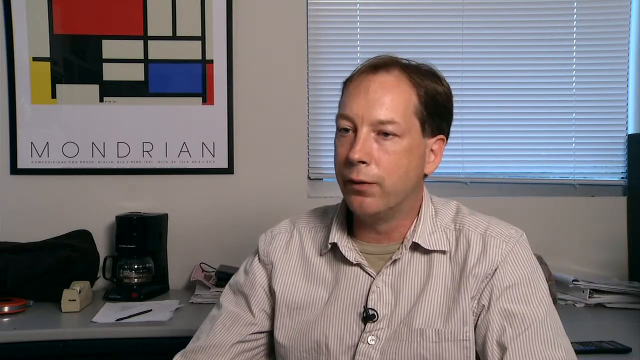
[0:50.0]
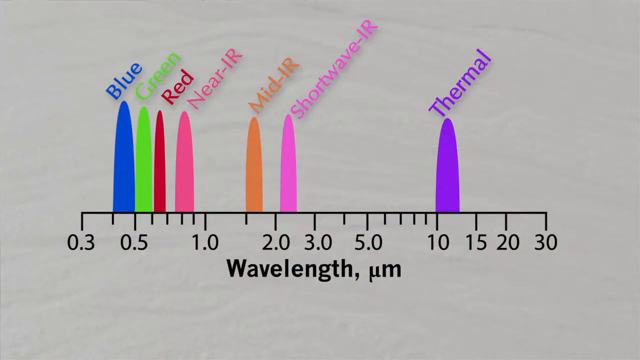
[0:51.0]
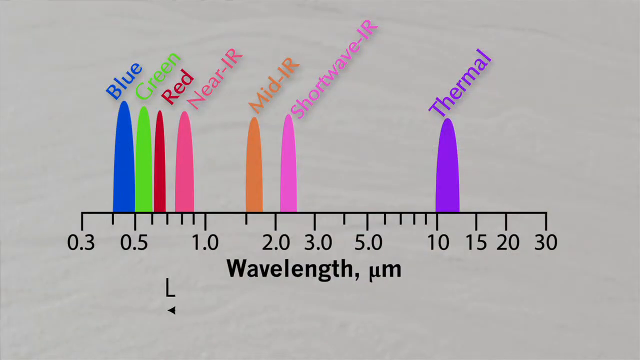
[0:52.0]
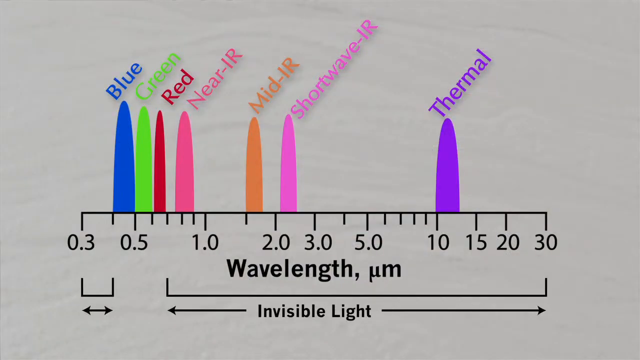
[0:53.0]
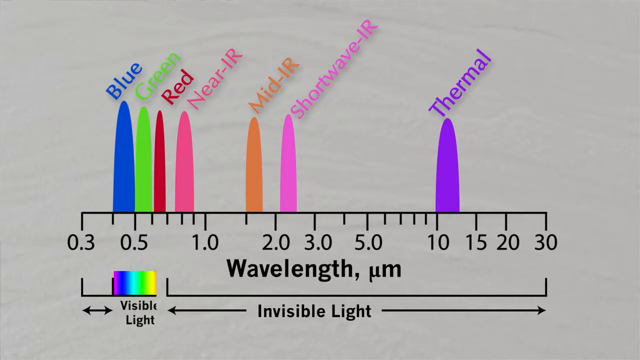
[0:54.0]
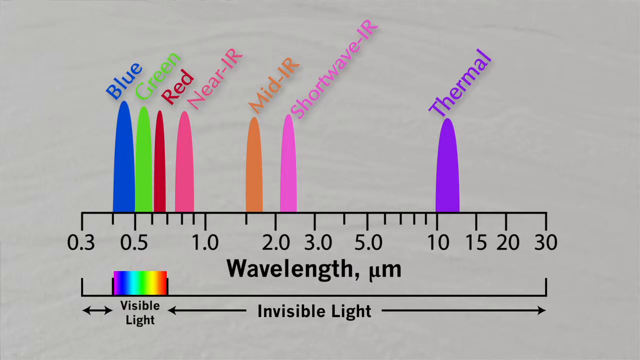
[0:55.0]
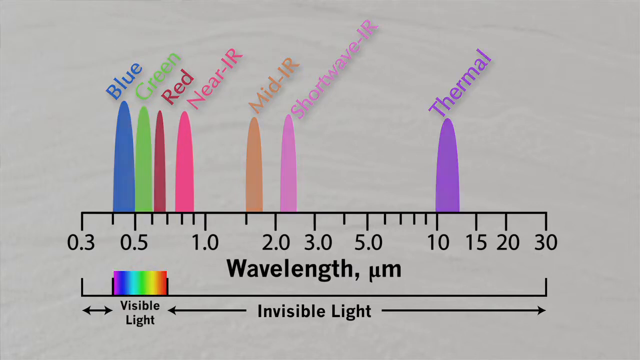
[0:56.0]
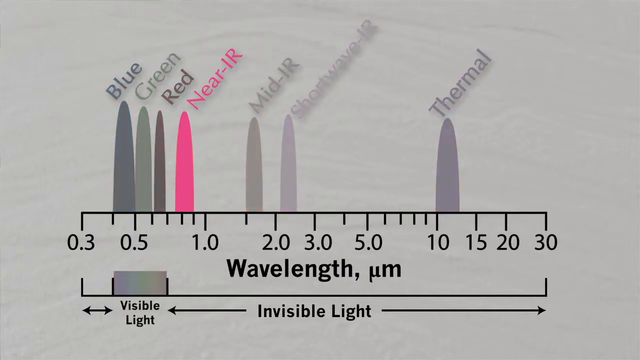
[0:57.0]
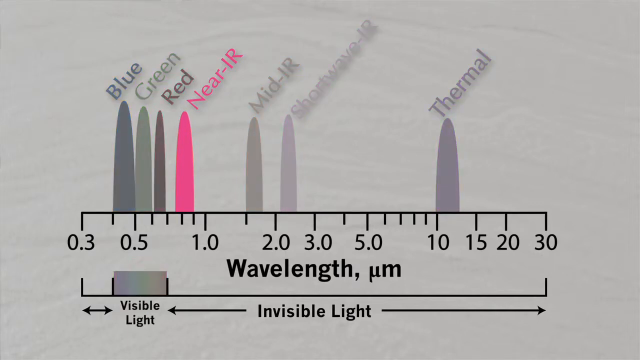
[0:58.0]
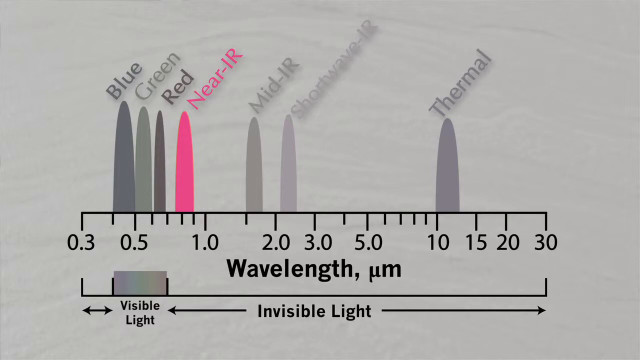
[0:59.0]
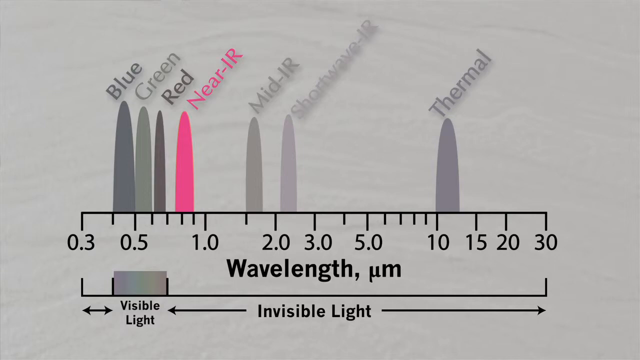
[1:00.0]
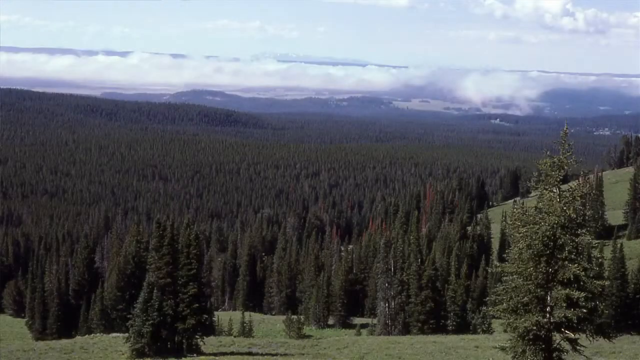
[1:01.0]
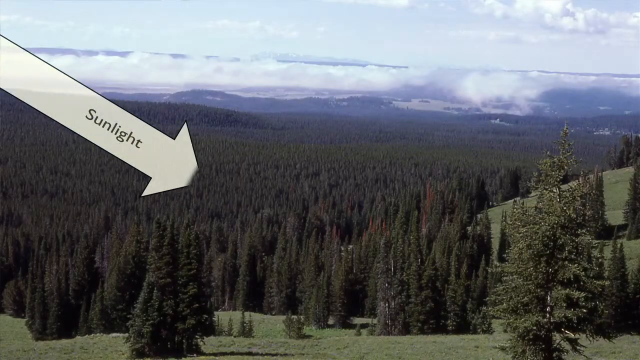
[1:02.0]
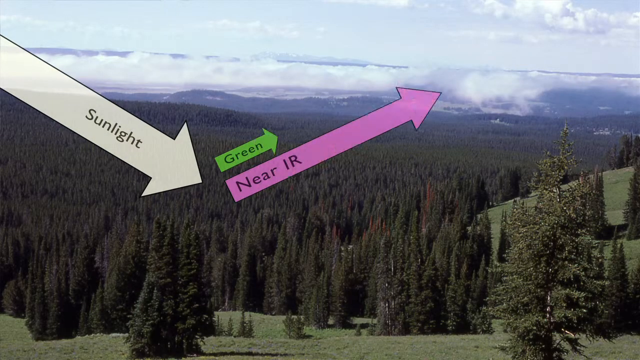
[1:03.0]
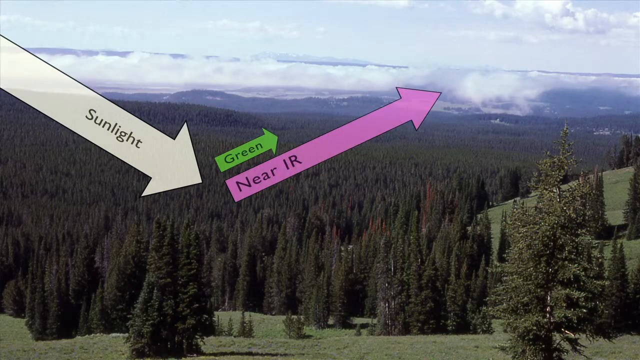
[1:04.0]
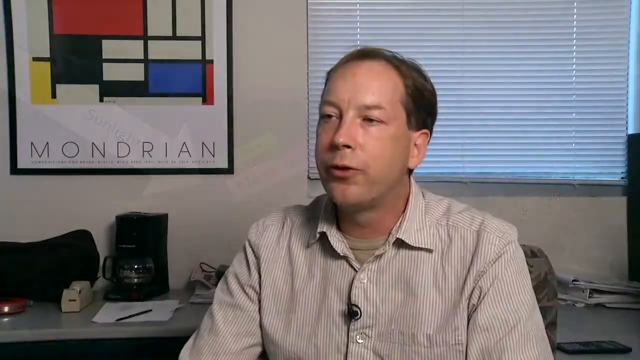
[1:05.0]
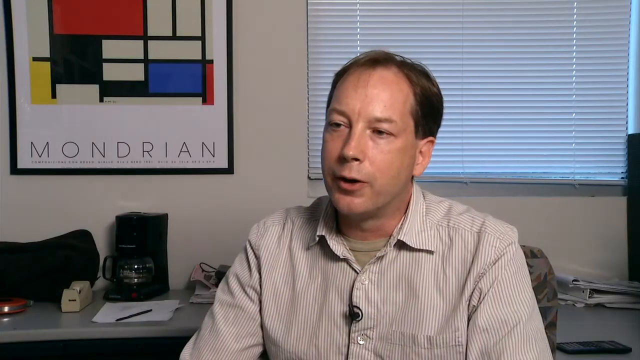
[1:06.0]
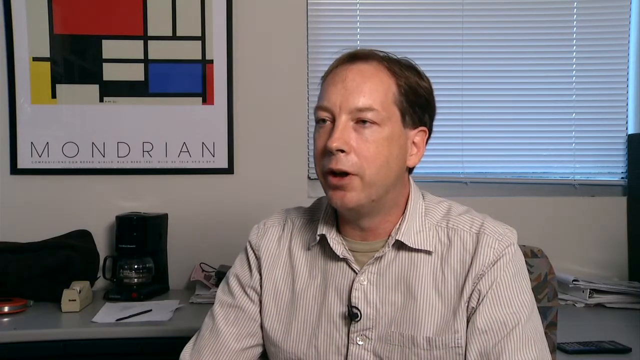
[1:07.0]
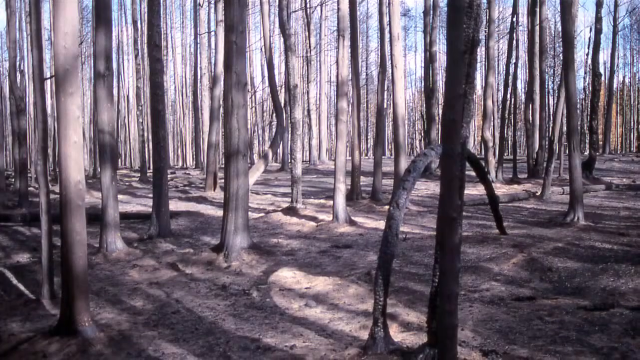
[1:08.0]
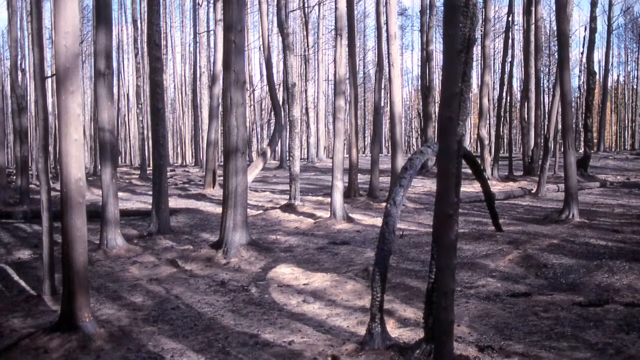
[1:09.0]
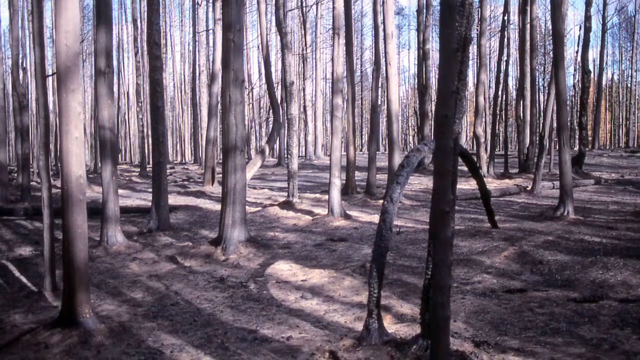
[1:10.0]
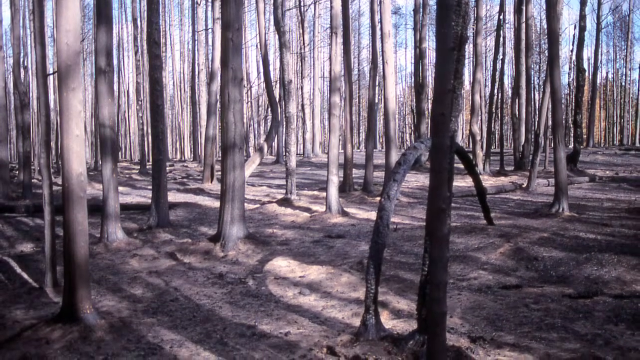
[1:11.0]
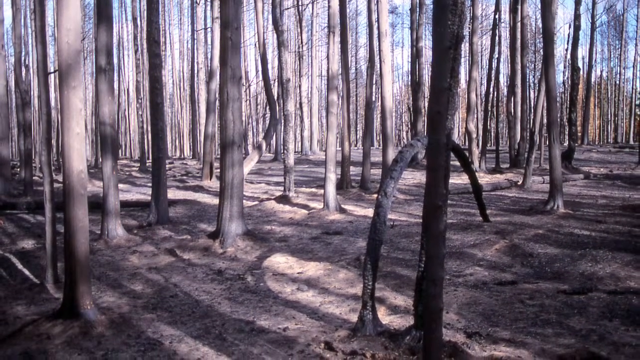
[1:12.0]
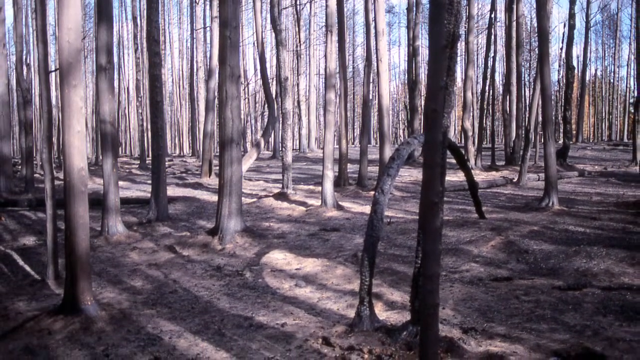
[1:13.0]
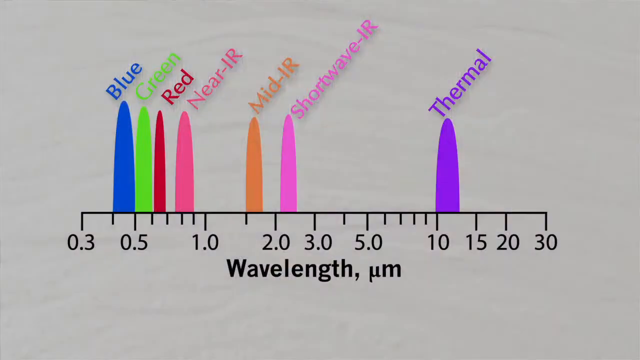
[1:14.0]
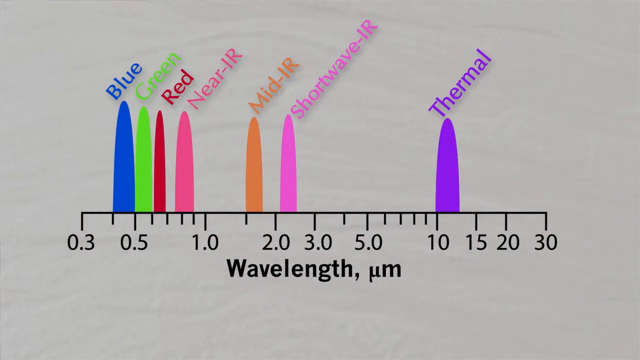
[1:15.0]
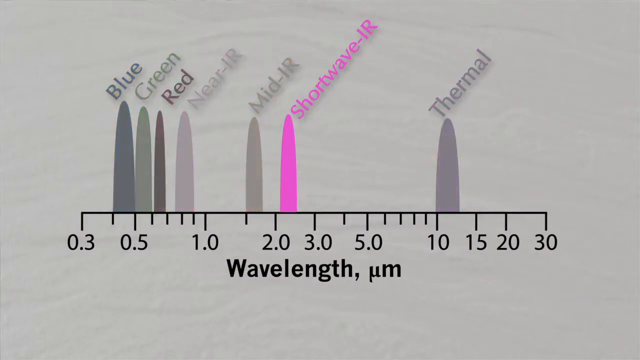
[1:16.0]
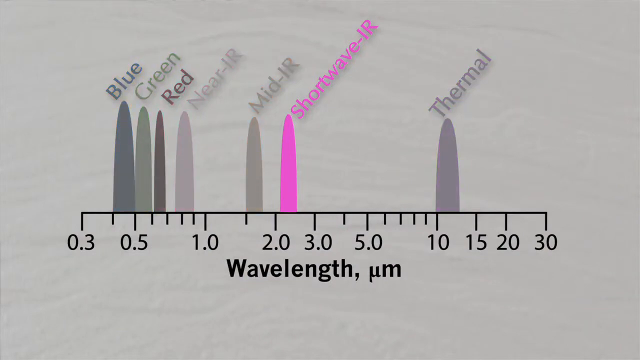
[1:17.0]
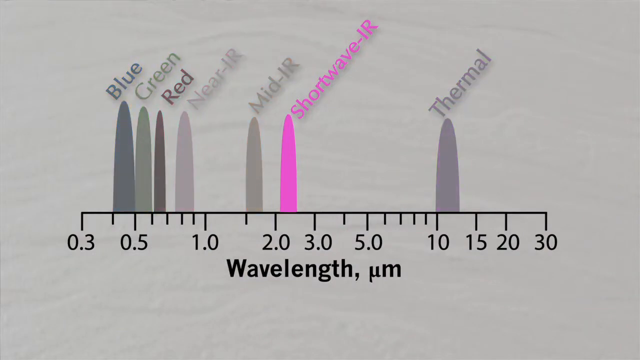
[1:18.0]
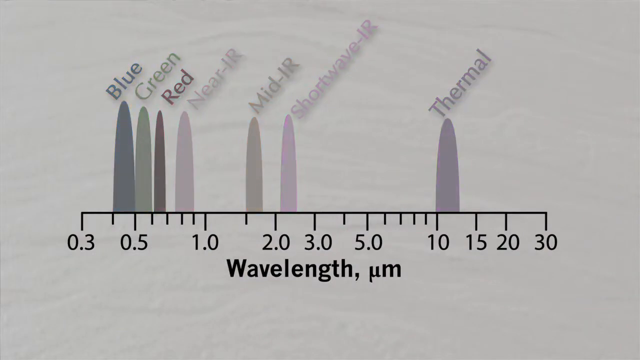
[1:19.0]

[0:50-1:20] A man in an office talks to an interviewer, looking somewhat off to the left. He wears a striped dress shirt buttoned almost to the top with the top button open, a somewhat green t-shirt underneath, and a microphone on one of the collars of his dress shirt. Behind him is a window with blinds. On the left side of the room is a picture that says "Mondrian" with some abstract images above that. Beneath the picture is a table with a coffee pot, a tape dispenser, a piece of paper with a pen on top of it, and what appear to be books and papers piled on top of each other. The scene changes to a wavelength graph running from 0.3 on the left to 30 on the right, with many numbers in between. Different colors on the graph represent blue, green, red, near-infrared, mid-infrared, short-wave infrared, and thermal. Under the graph it says "wavelength, UM". It stays on the screen for a while, and then at the very bottom it says "invisible light", with "visible light" on the left side, and a small rainbow-like gradient chart appears. The scene then changes to an overhead view of a forest with clouds in the back. A transparent arrow labeled "sunlight" comes in from the left side, a green arrow labeled "green" points up and to the right, and a reddish-pinkish arrow labeled "near-IR" points up and to the right. The video returns to the man talking, then shows a barren forest that looks like it has been burned in a fire, with no leaves on the trees, and then returns to the wavelength chart, which changes to a black-and-white type of color.